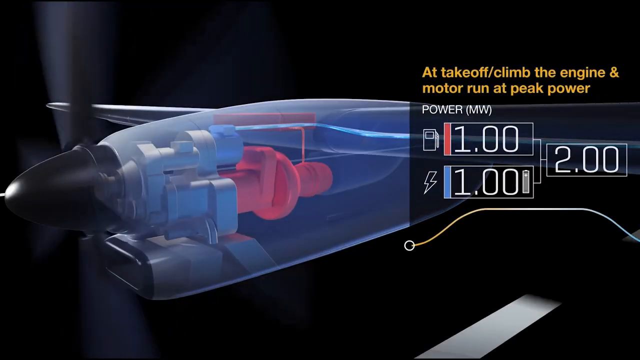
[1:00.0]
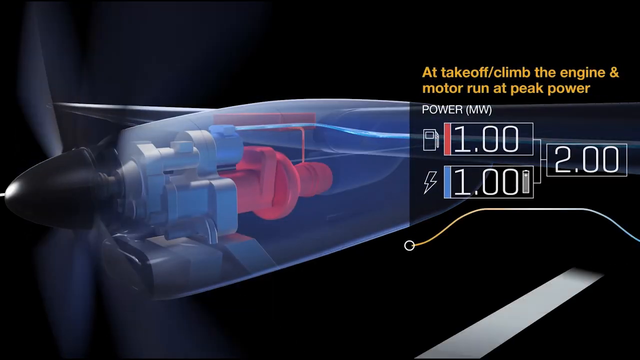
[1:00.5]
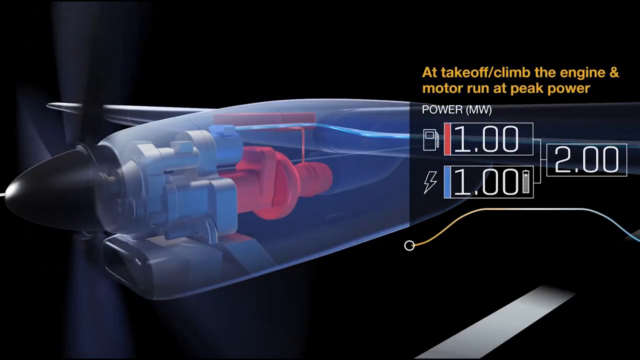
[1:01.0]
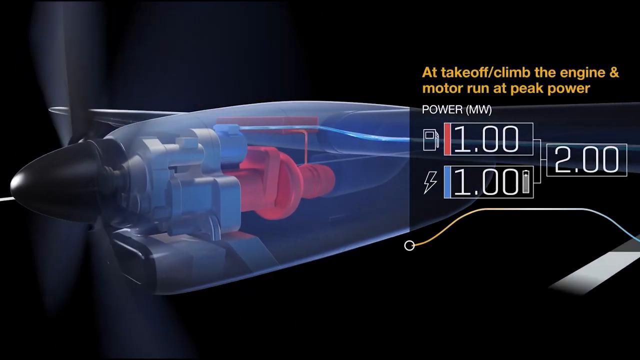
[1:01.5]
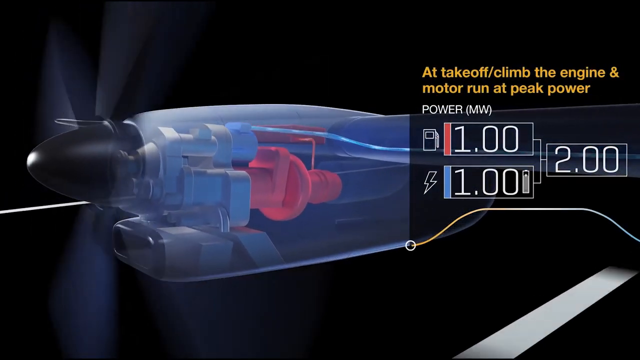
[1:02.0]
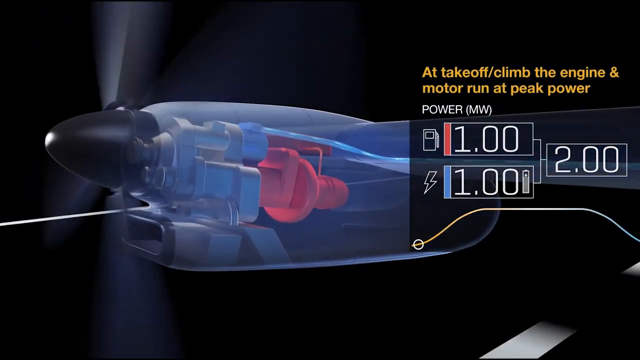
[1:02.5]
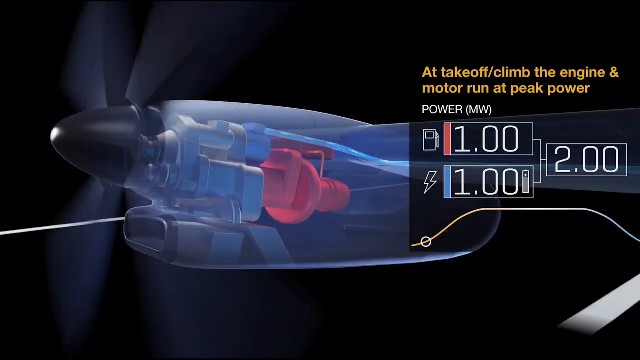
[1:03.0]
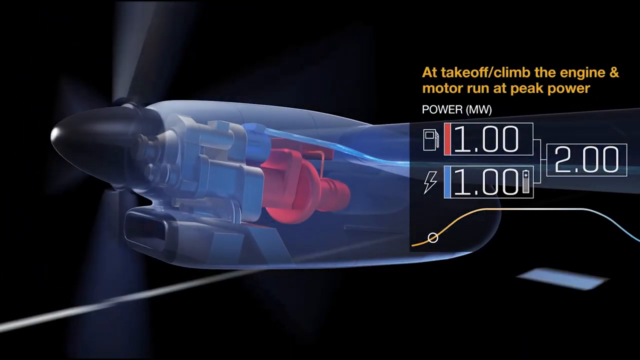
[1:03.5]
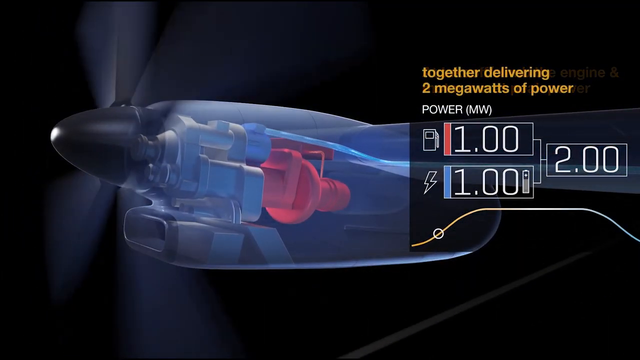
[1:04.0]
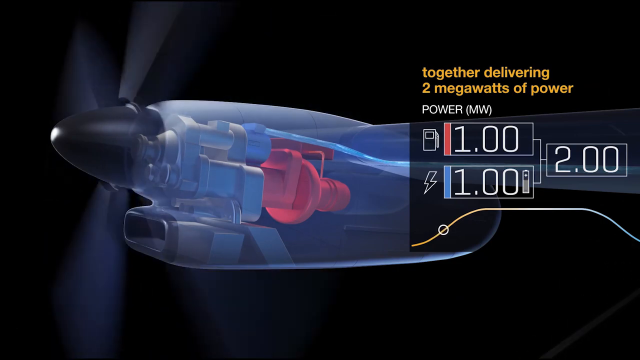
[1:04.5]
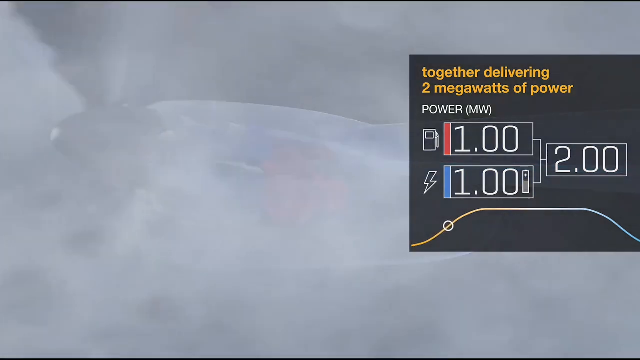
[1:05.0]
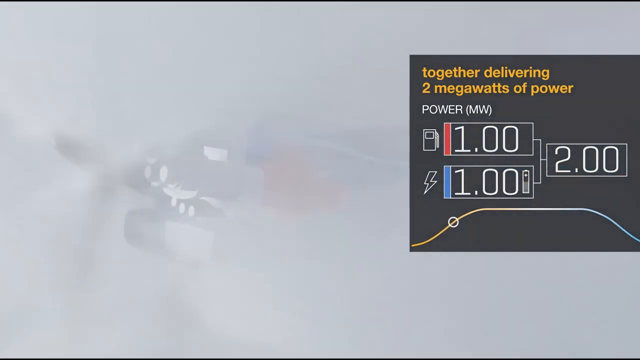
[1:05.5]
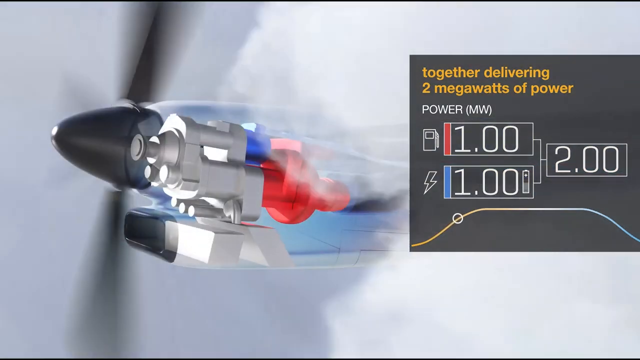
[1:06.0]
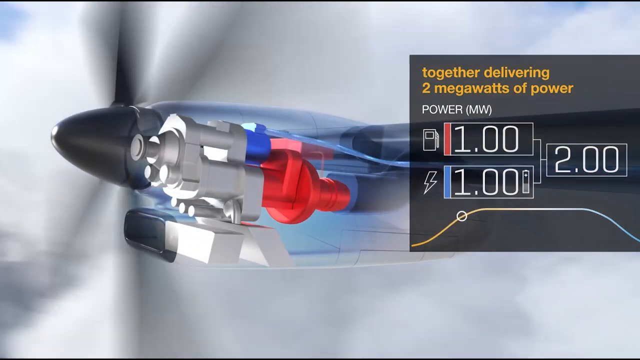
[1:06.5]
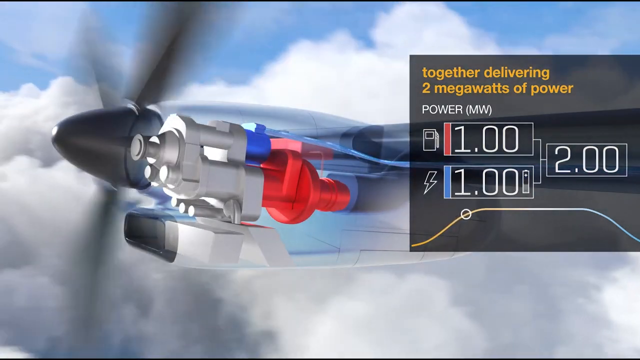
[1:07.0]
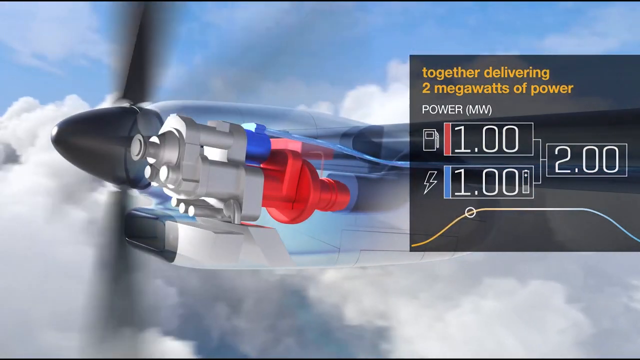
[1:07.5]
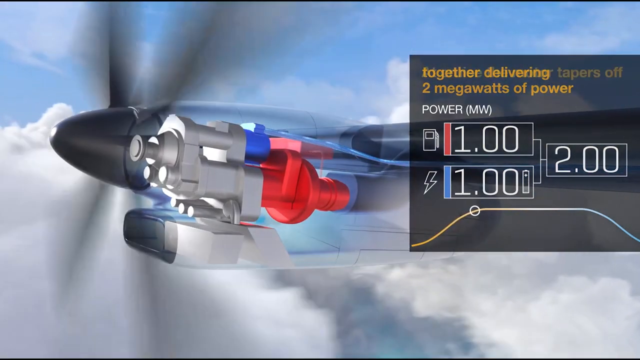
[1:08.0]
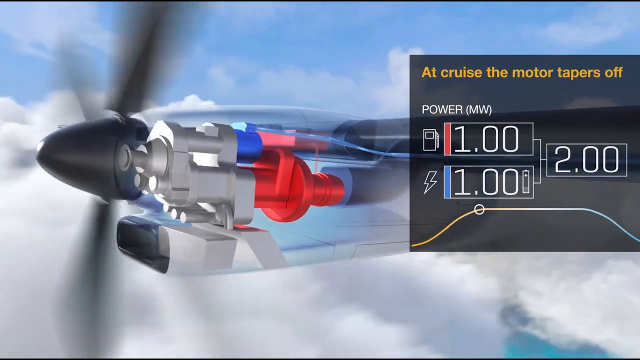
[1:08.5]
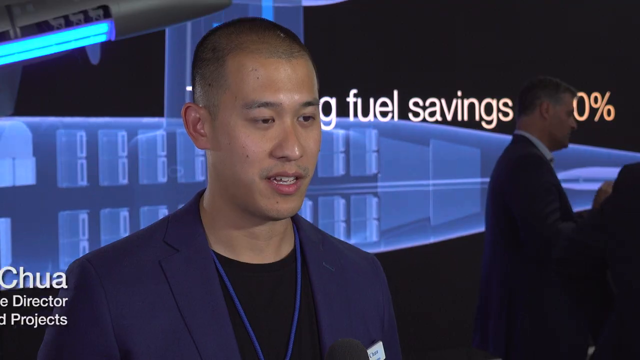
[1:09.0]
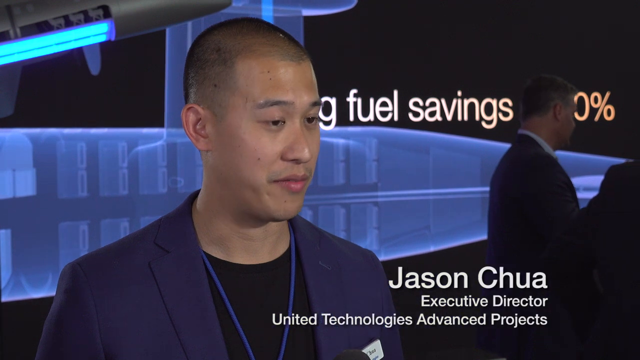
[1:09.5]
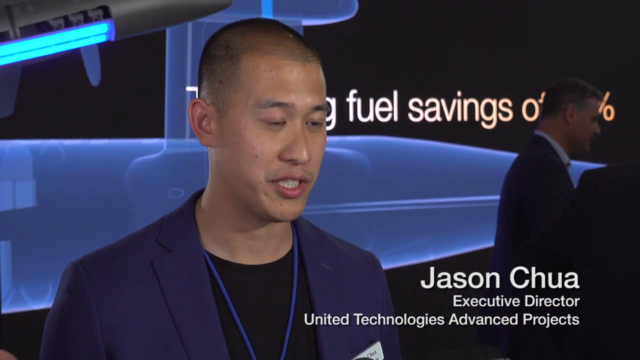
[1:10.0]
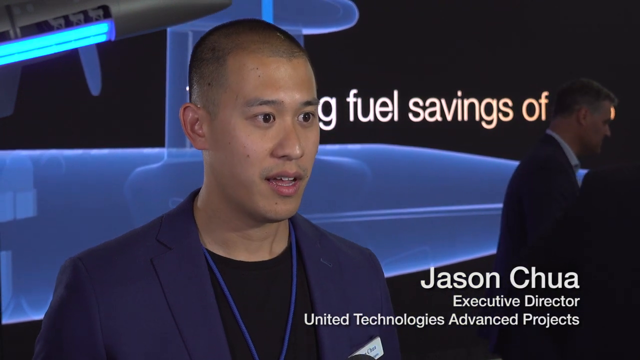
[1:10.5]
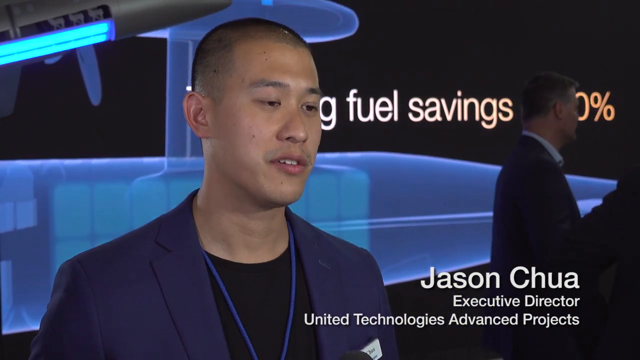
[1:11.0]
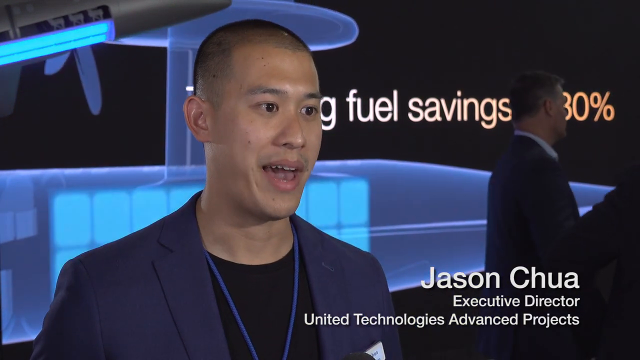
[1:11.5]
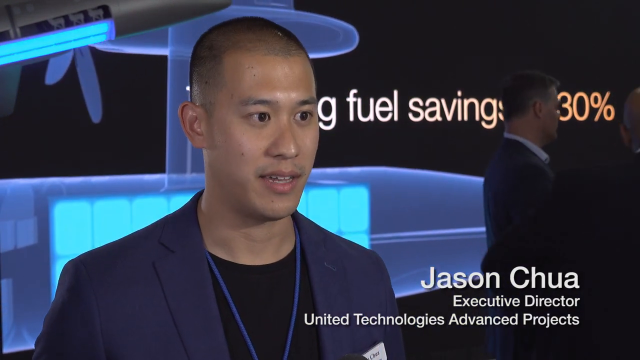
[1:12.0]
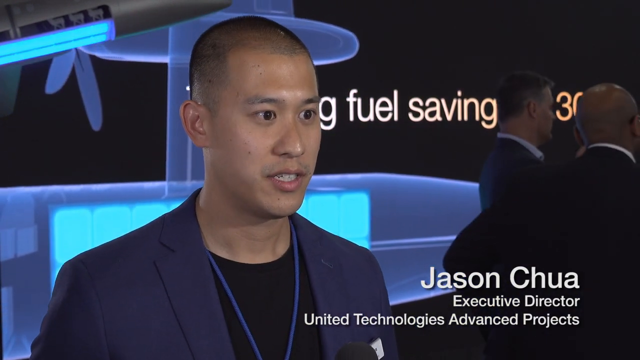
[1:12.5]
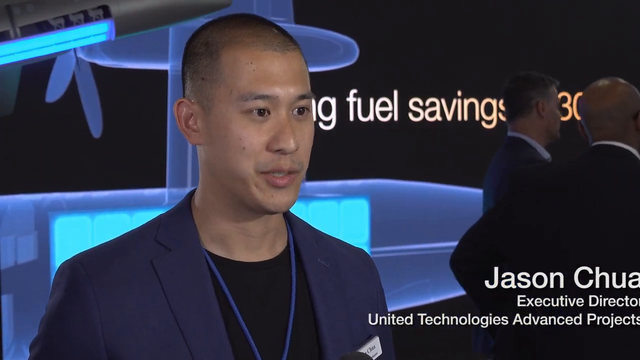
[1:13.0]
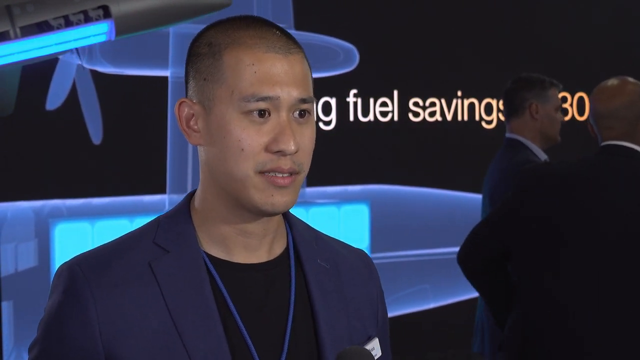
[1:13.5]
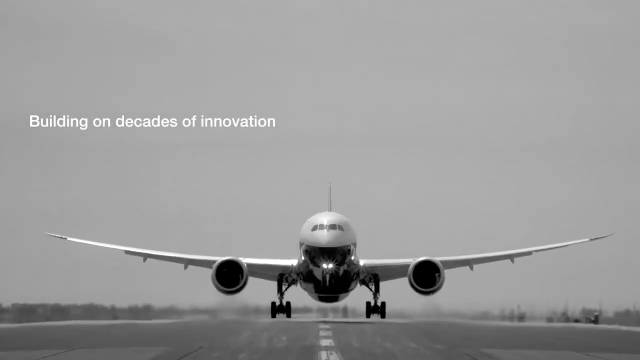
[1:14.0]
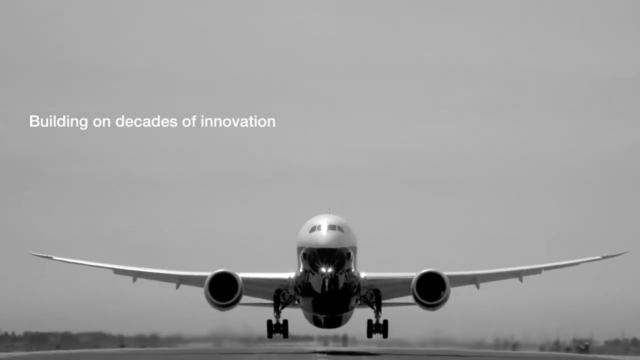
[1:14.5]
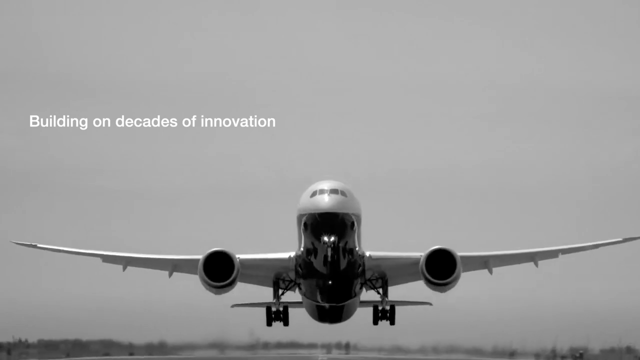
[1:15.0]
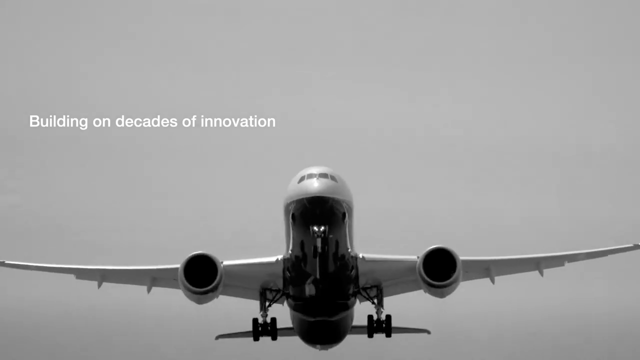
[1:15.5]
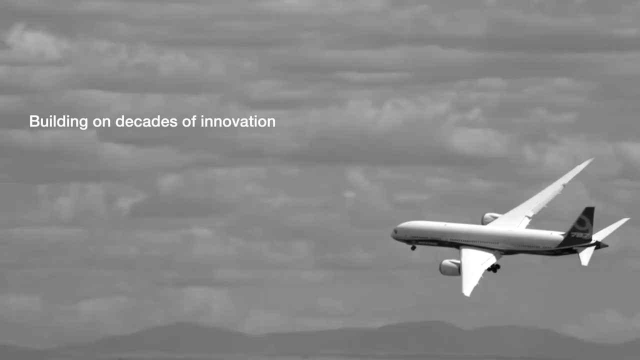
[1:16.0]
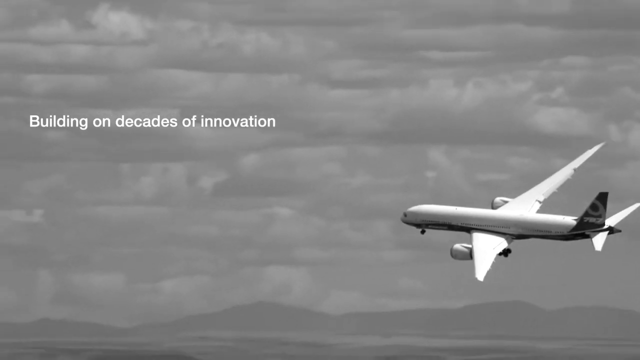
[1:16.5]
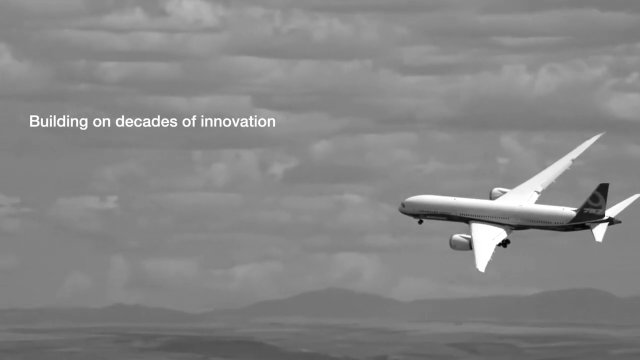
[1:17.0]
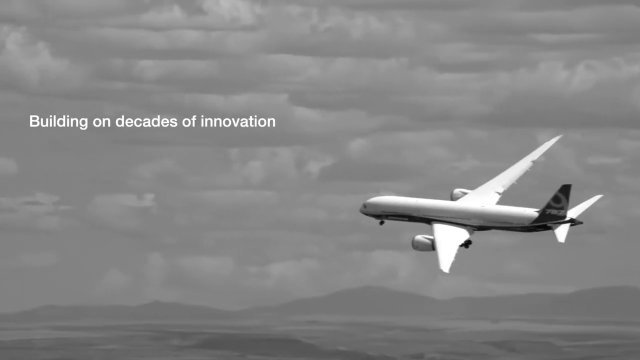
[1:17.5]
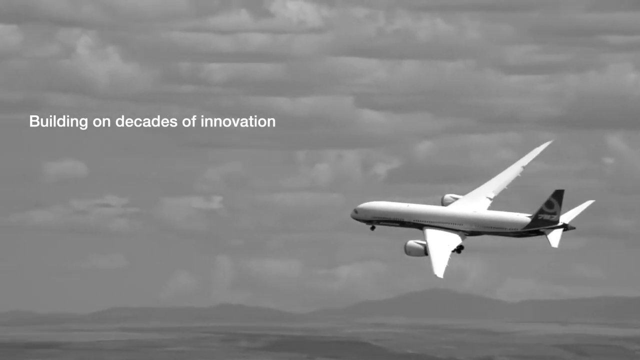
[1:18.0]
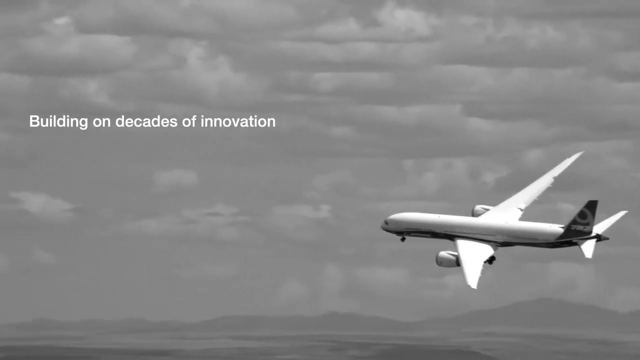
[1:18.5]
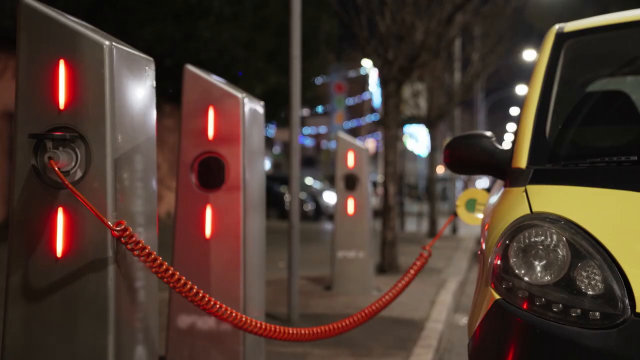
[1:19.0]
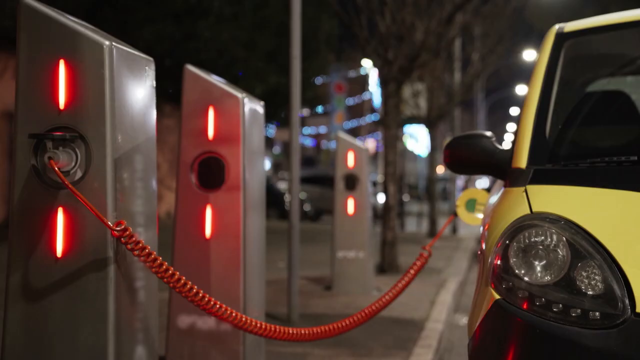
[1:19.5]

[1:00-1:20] A chart shows takeoff and climb, with the engine and motor running at peak power, displaying the megawatts, the power and the fuel used at a one-to-one ratio. The engine is then shown running and spinning, with power coming through the lines and a flight path moving across the bottom. Once it is fully up, Jason Chua appears on screen; he is executive director of United Technologies Advanced Projects.